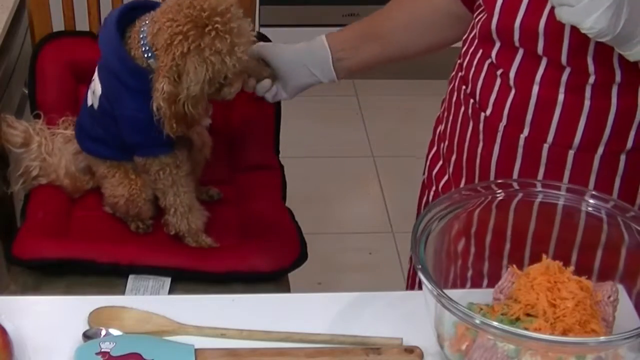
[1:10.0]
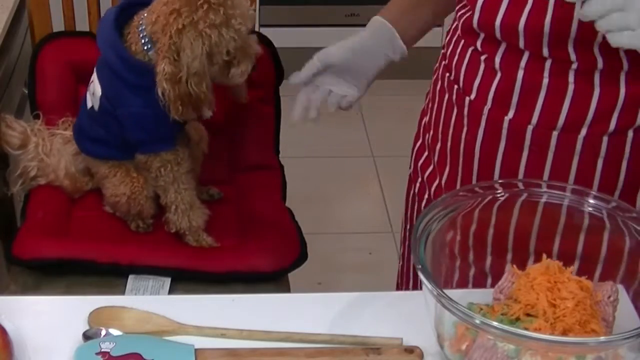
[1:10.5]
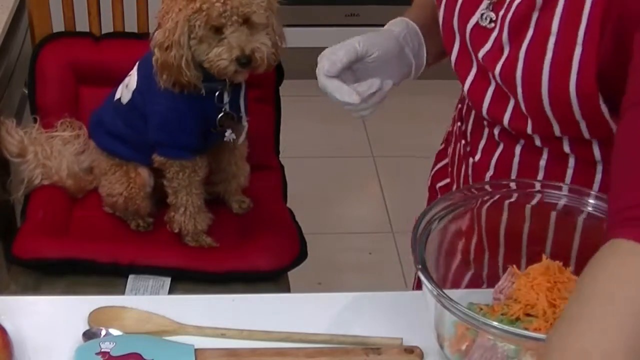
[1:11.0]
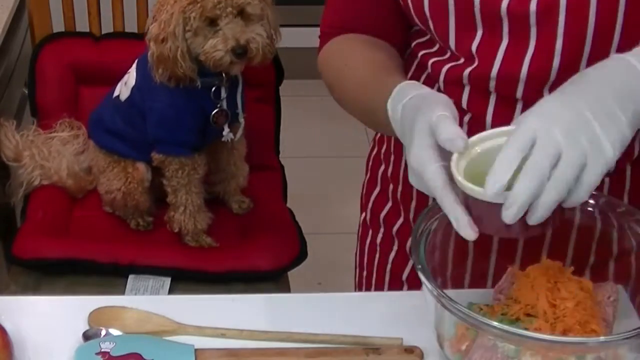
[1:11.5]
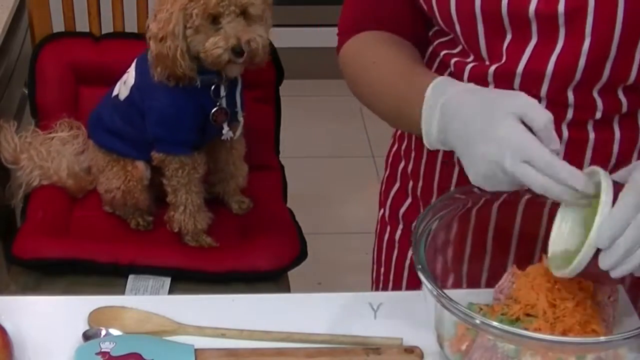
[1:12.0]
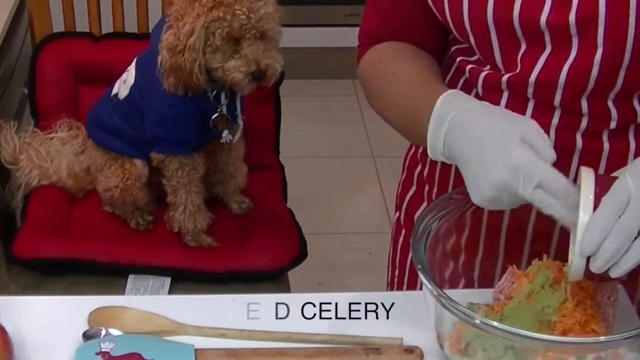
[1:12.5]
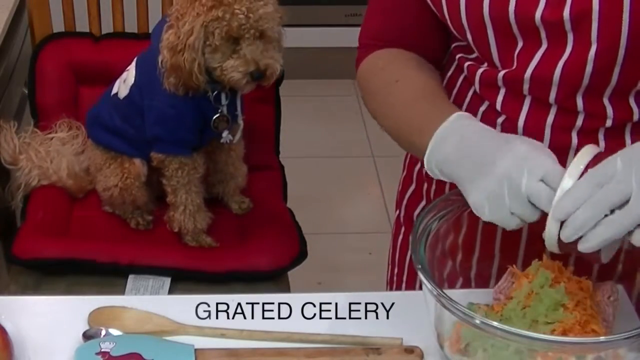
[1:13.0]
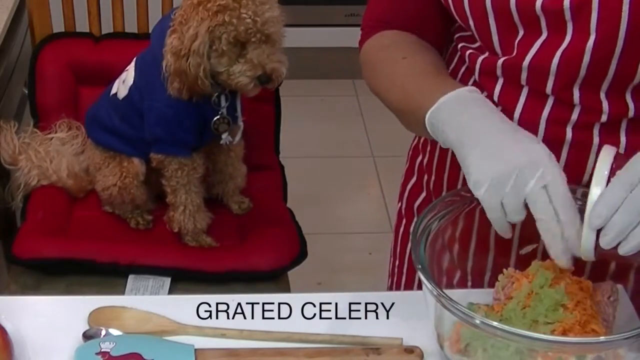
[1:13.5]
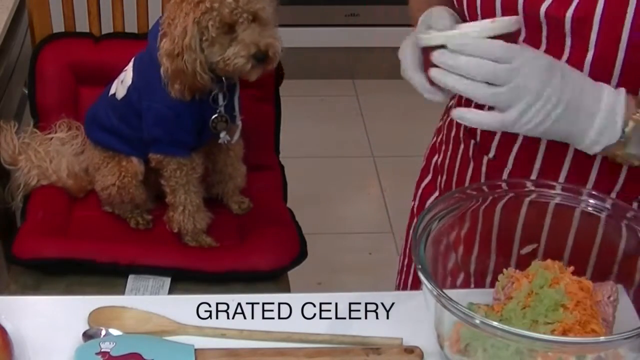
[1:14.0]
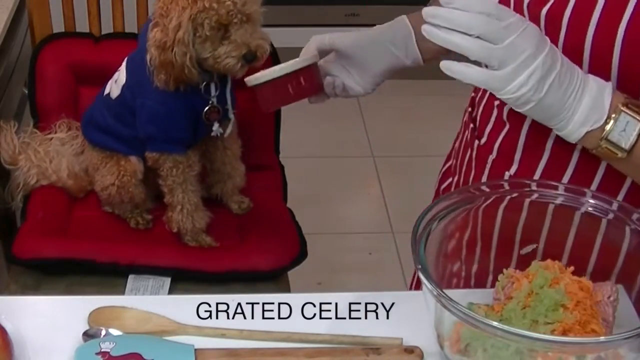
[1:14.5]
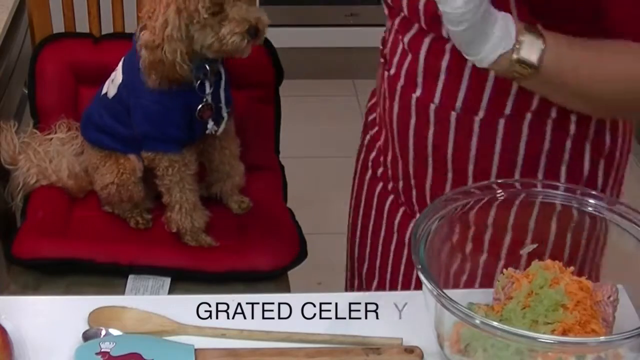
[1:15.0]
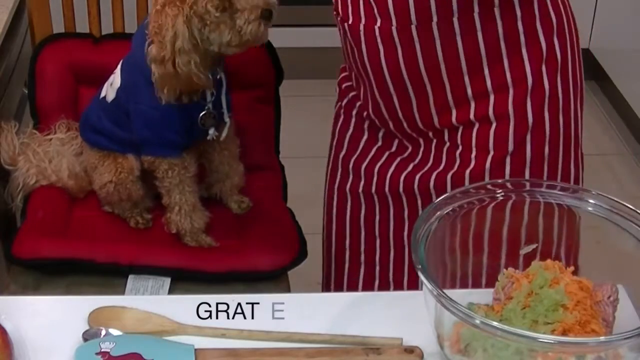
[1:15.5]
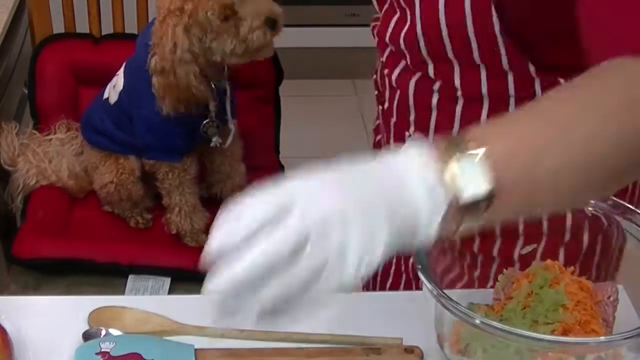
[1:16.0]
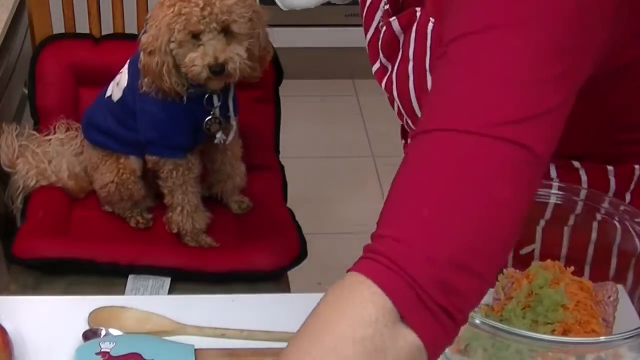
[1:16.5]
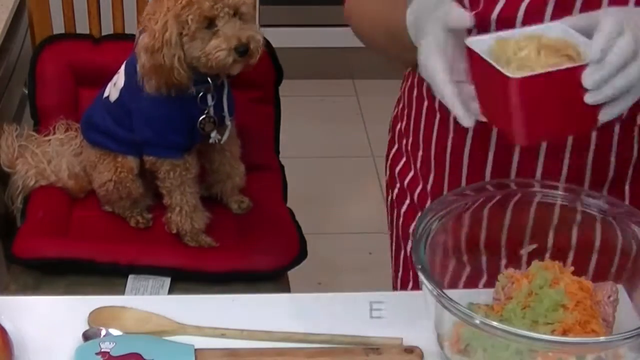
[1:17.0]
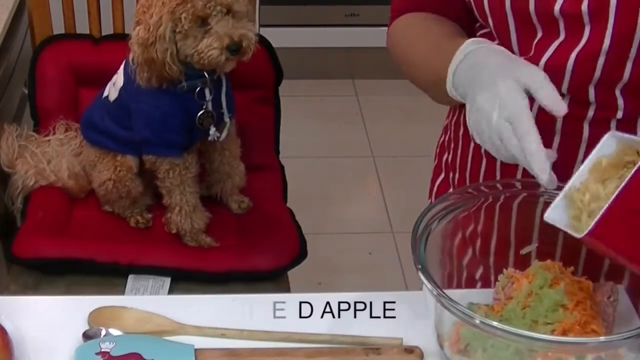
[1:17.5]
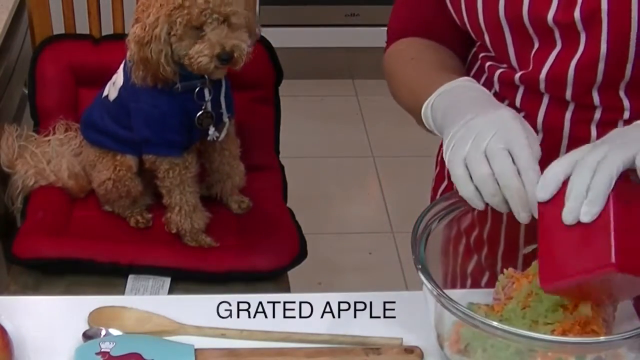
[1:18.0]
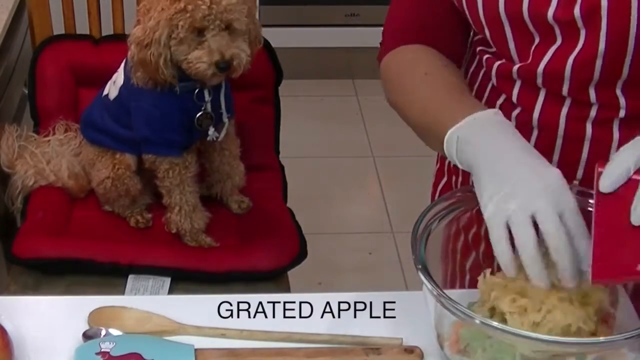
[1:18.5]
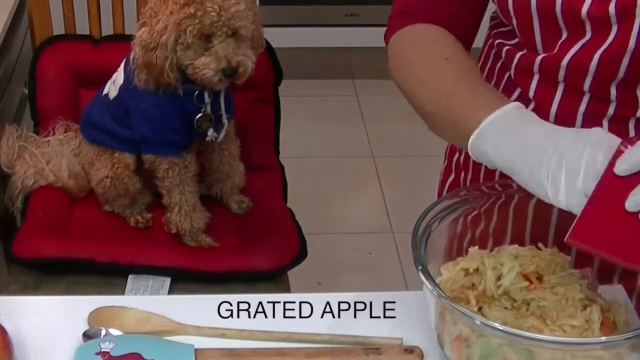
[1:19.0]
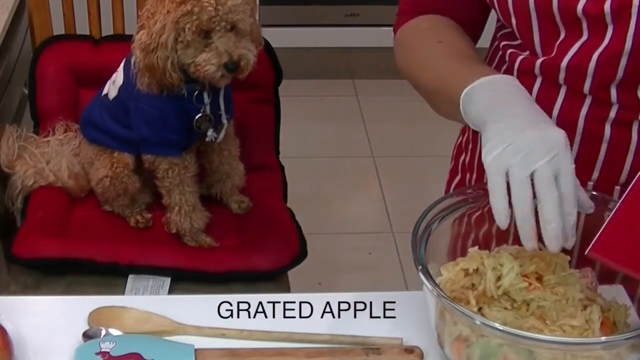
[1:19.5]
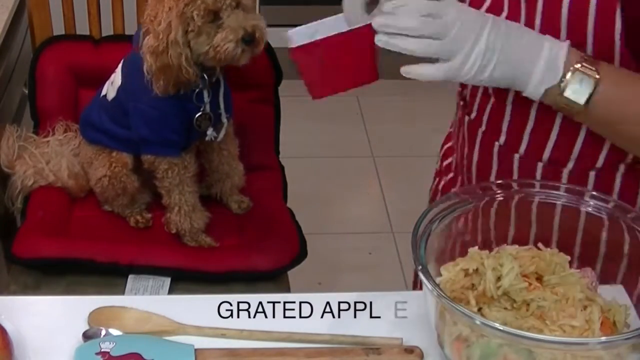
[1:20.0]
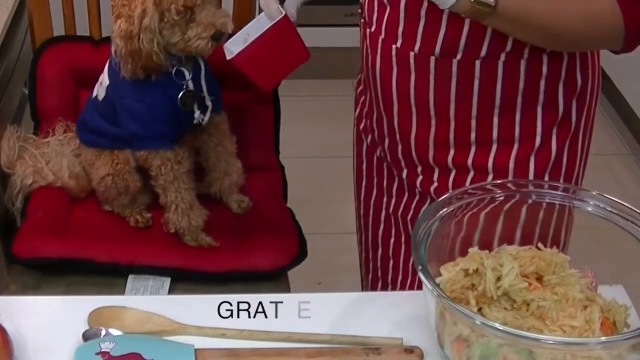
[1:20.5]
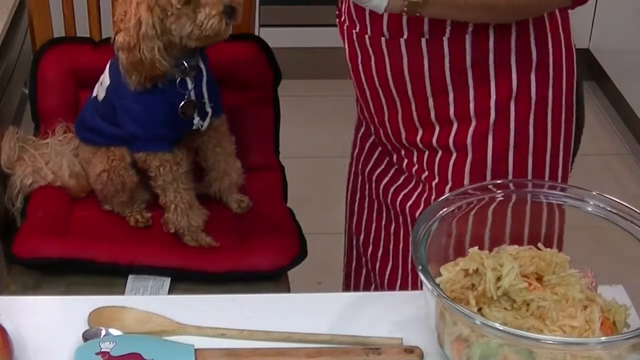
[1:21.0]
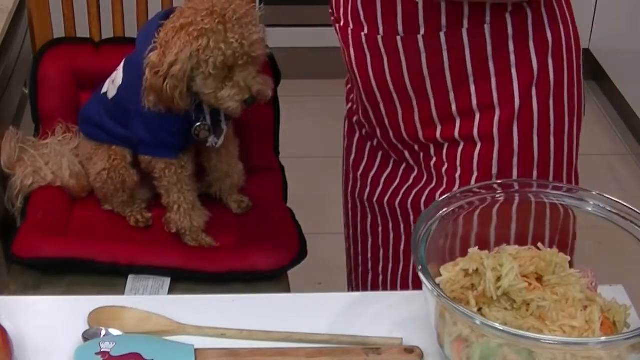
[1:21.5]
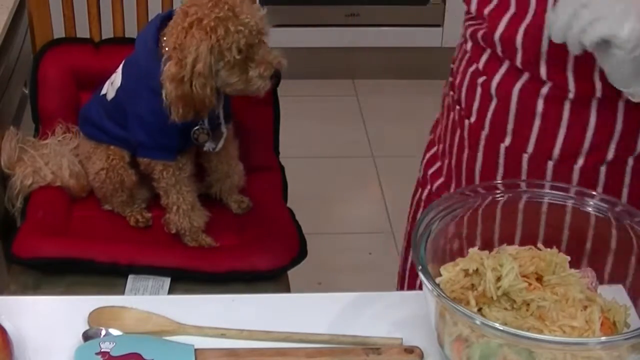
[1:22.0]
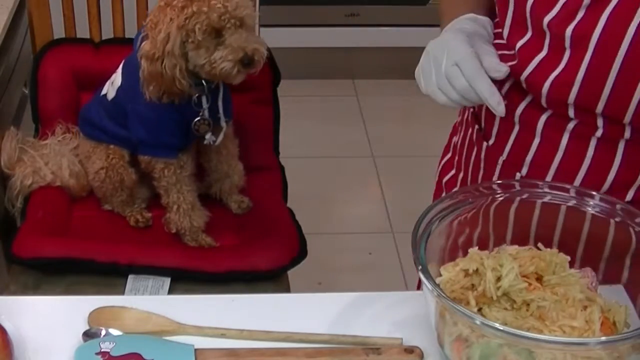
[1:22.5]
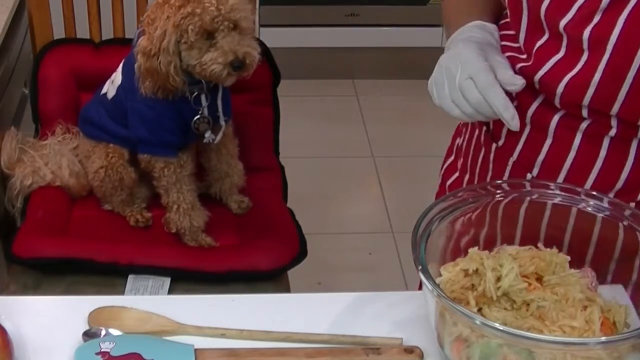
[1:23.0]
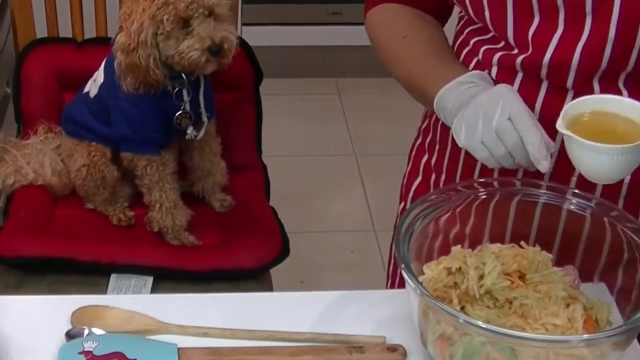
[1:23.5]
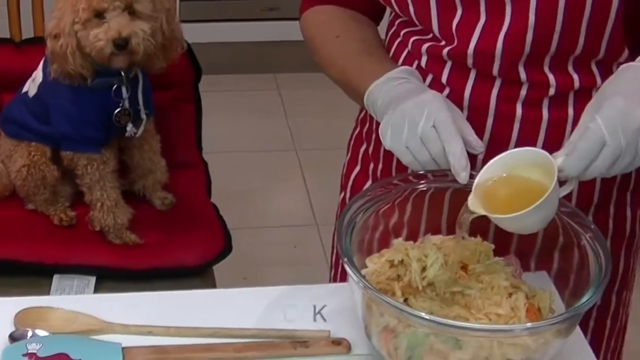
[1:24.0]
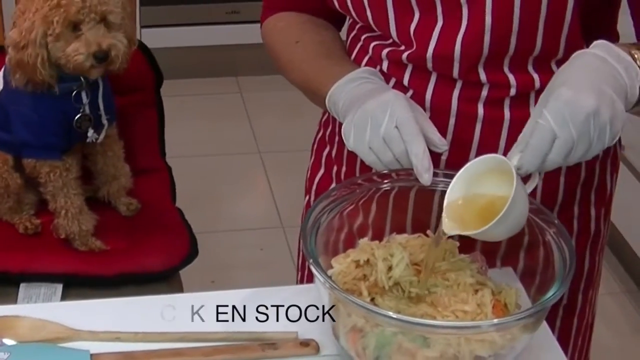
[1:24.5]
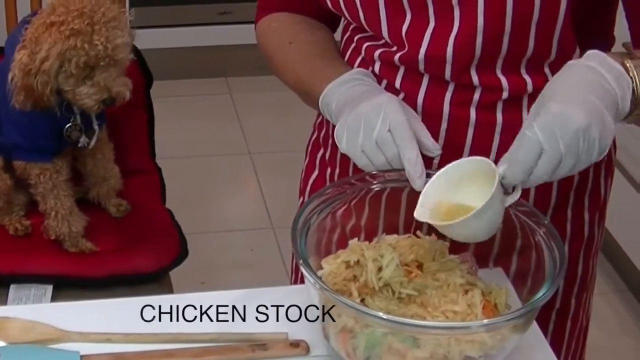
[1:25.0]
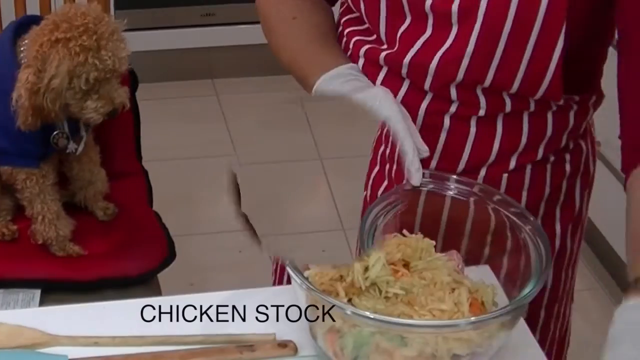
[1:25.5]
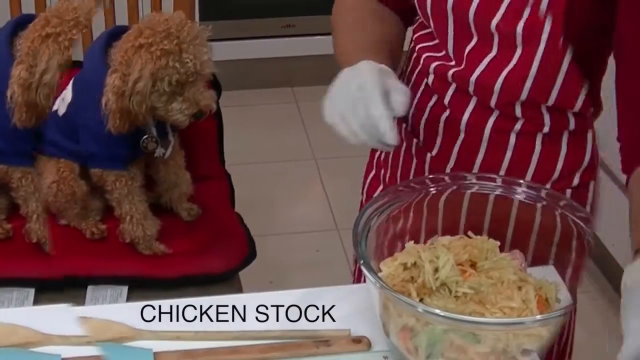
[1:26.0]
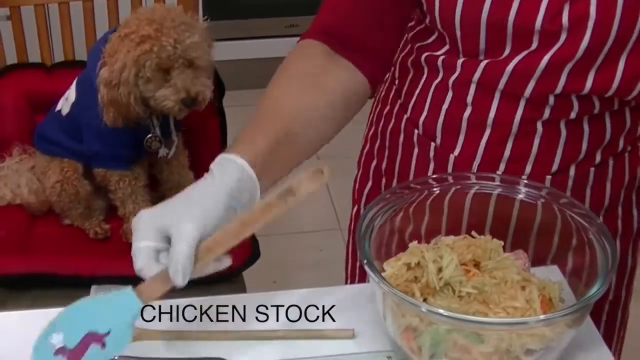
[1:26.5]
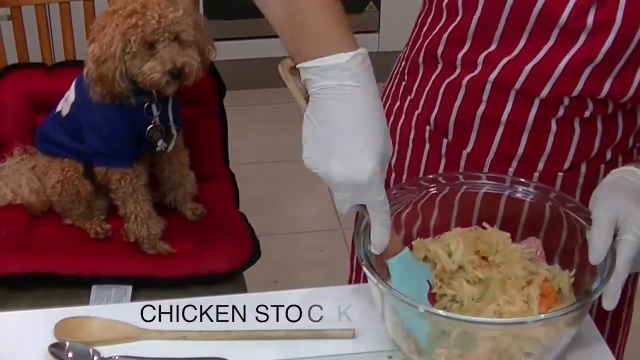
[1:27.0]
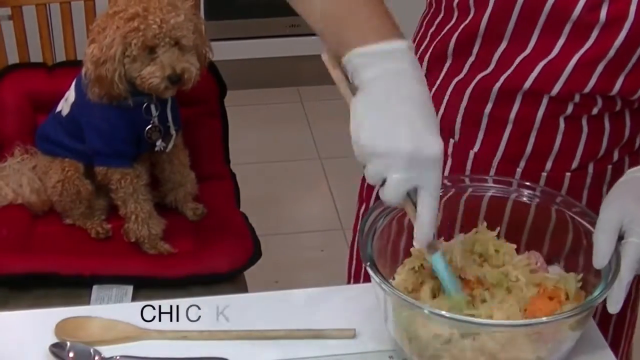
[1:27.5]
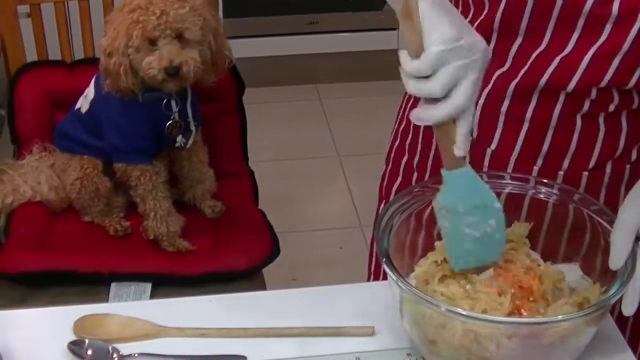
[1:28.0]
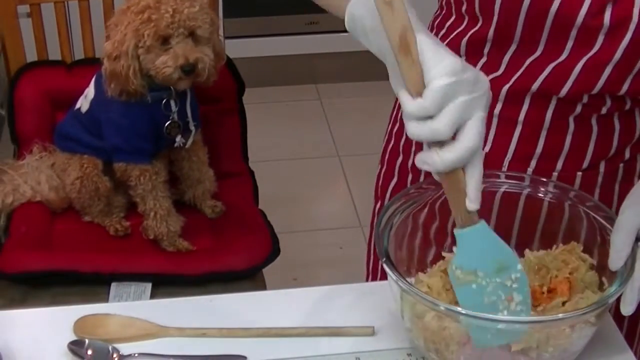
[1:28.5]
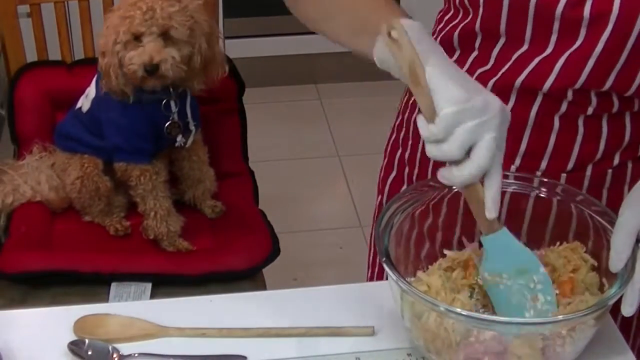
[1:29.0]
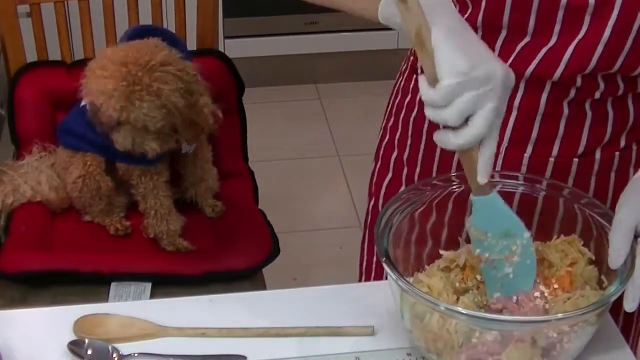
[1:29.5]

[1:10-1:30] A brown dog holds his paw up and a lady holds it in her hand. The dog wears a blue sweater with white writing on it and sits on a red cushion on a brown chair. The woman wears a red apron with white stripes down it and white plastic gloves. In front of her, on a white table, is a glass bowl containing various ingredients, including some vegetables, some oats and some mince. She pours what looks to be grated celery into the bowl, then a tub of grated apple, then chicken stock. She then takes a wooden spoon that is blue at the end and starts to stir all the ingredients together in the clear glass bowl.